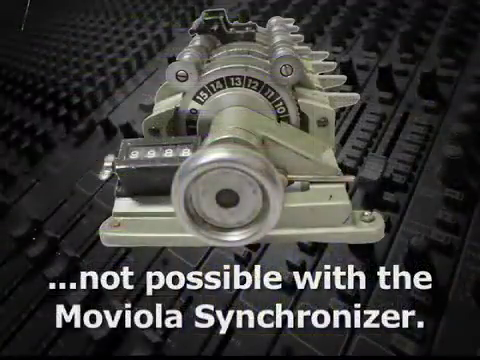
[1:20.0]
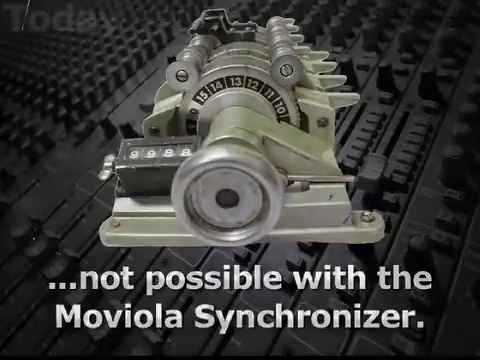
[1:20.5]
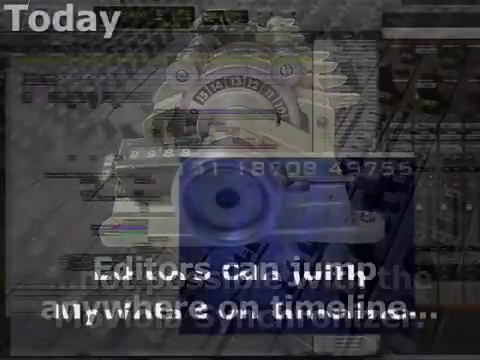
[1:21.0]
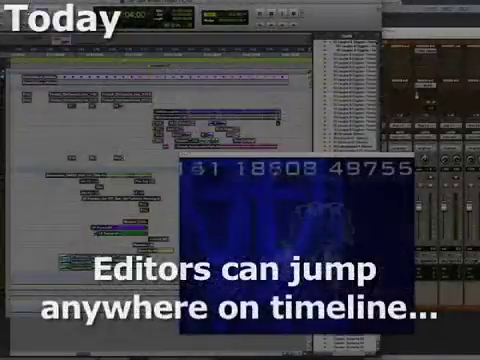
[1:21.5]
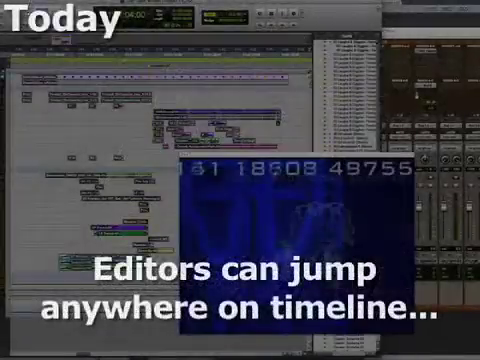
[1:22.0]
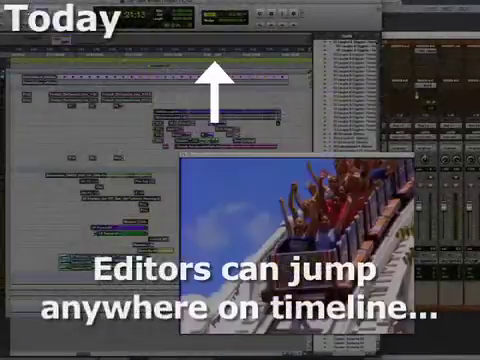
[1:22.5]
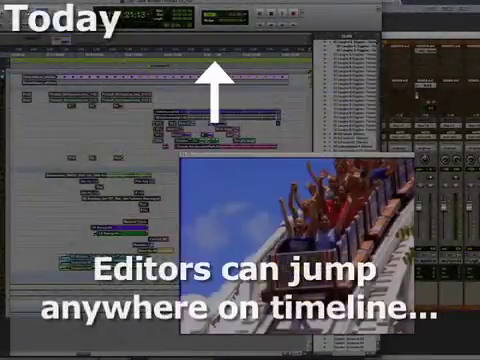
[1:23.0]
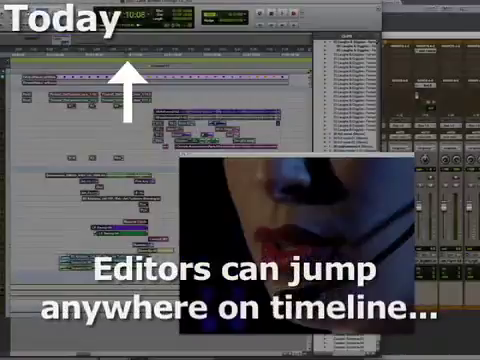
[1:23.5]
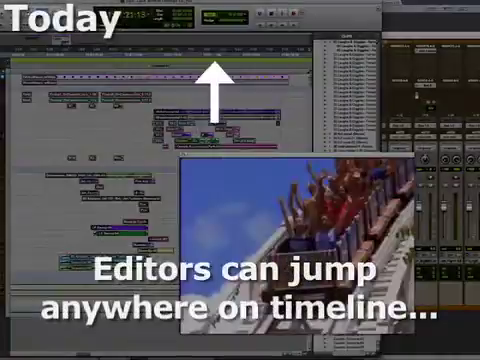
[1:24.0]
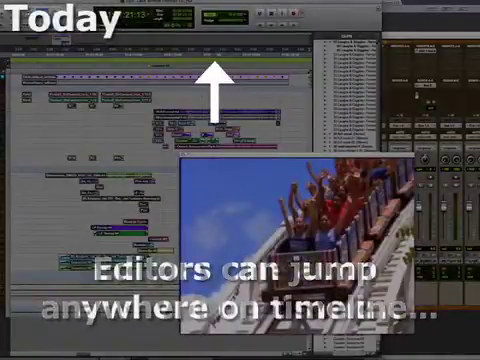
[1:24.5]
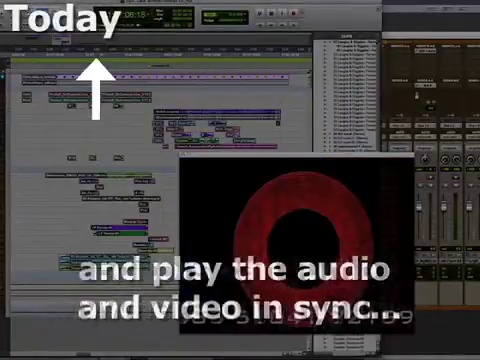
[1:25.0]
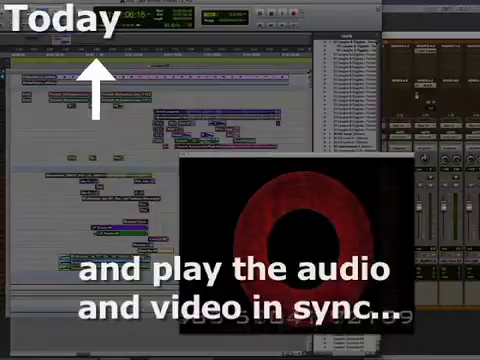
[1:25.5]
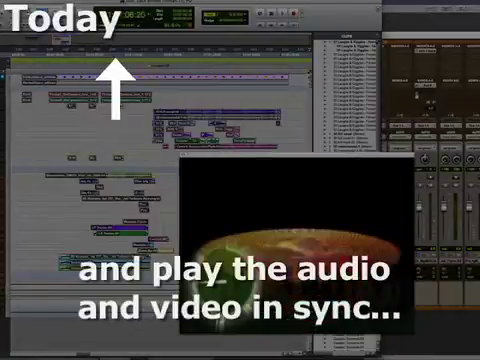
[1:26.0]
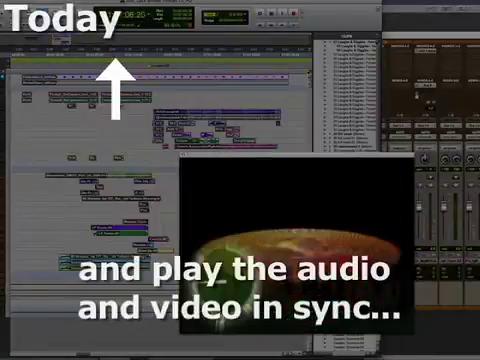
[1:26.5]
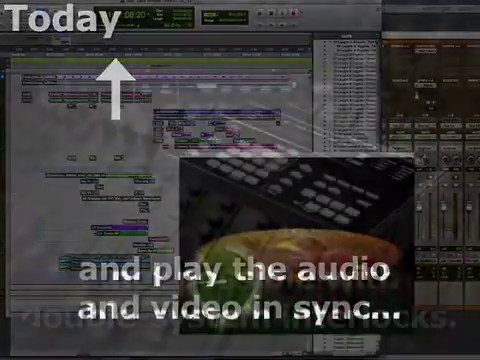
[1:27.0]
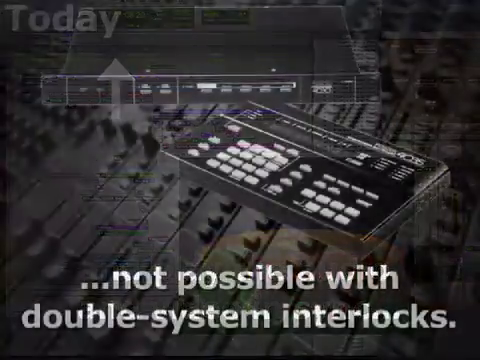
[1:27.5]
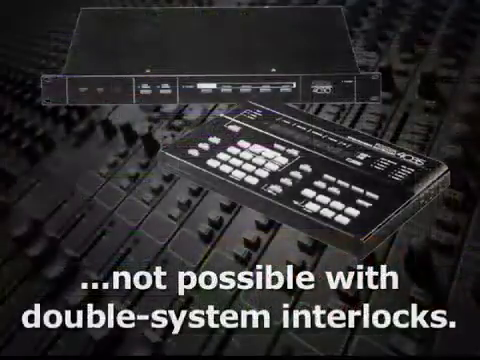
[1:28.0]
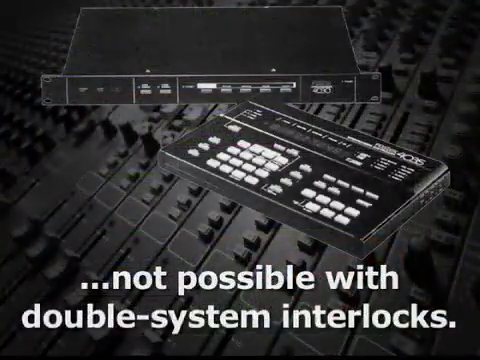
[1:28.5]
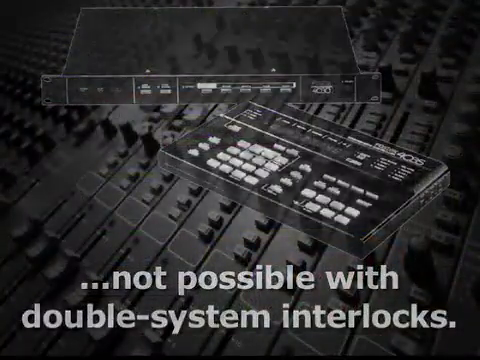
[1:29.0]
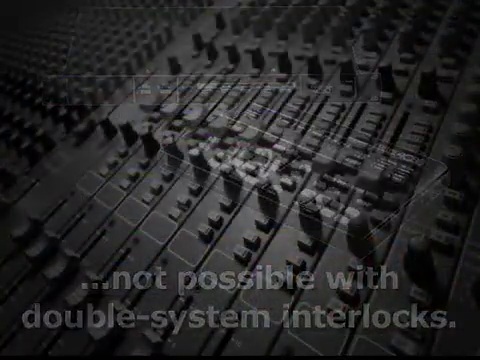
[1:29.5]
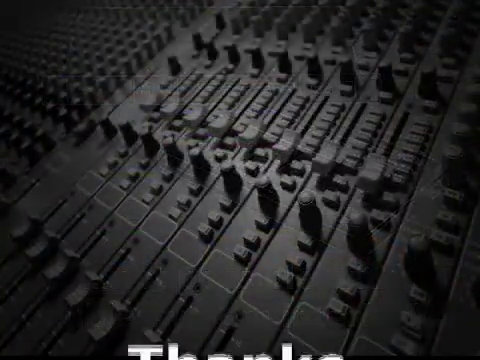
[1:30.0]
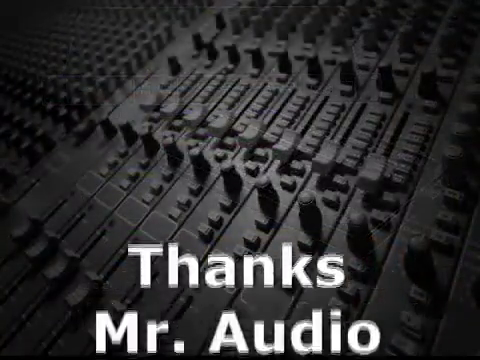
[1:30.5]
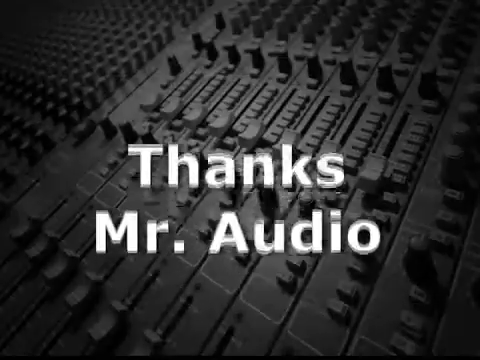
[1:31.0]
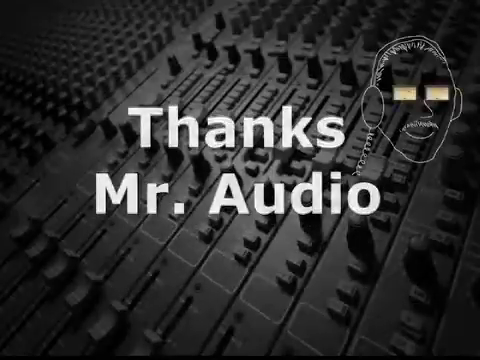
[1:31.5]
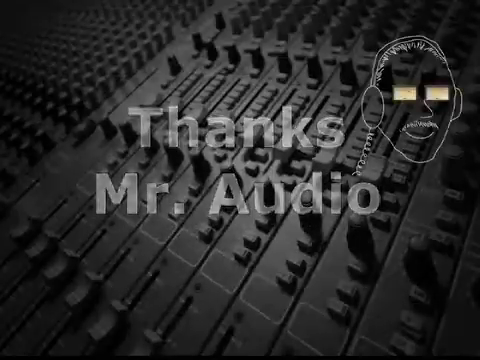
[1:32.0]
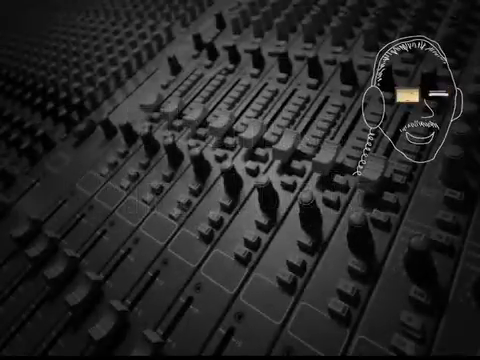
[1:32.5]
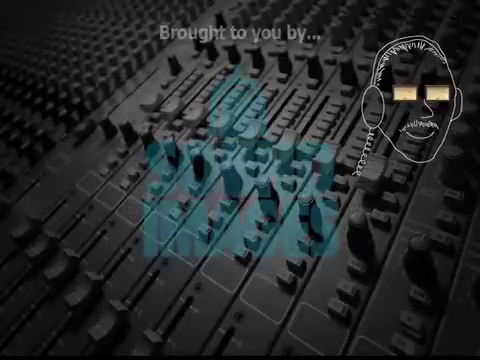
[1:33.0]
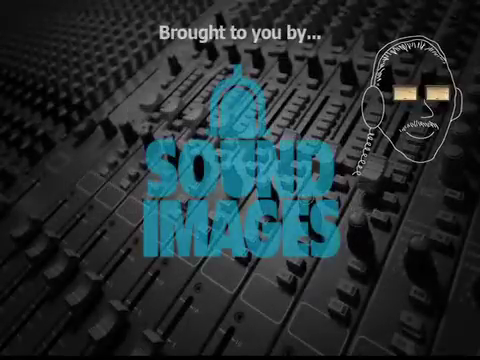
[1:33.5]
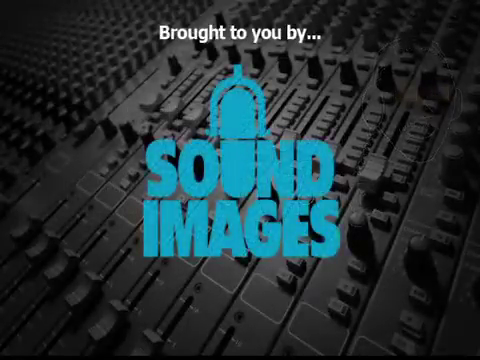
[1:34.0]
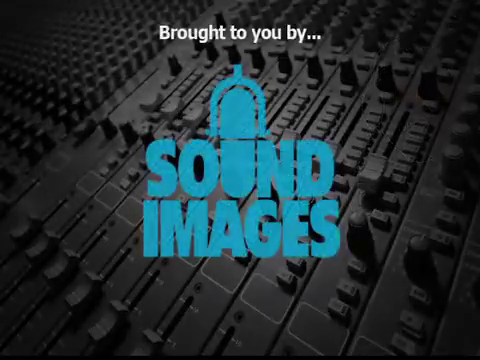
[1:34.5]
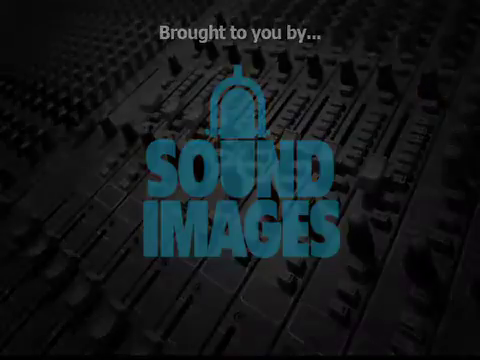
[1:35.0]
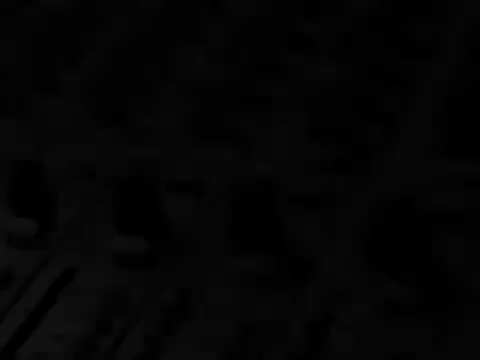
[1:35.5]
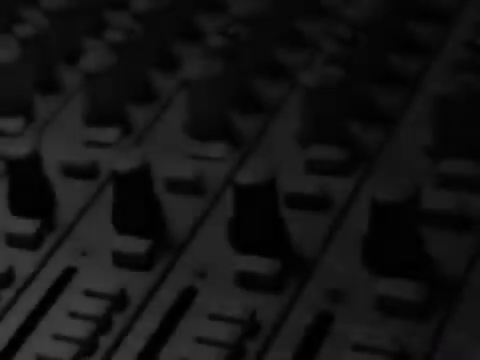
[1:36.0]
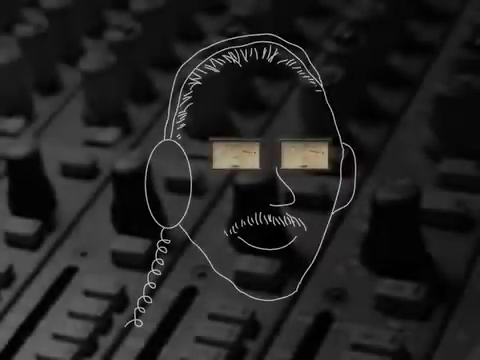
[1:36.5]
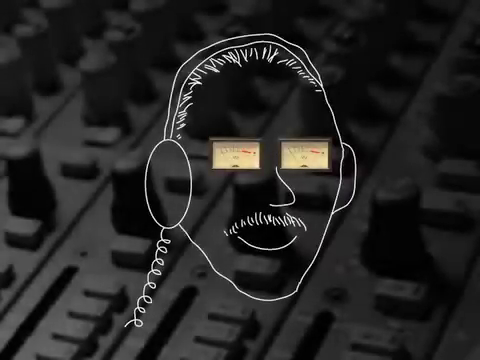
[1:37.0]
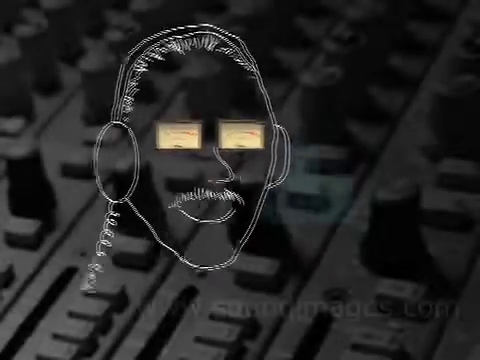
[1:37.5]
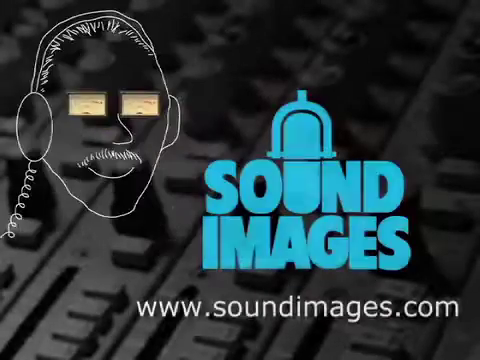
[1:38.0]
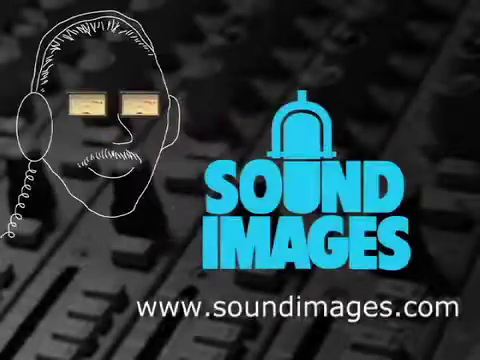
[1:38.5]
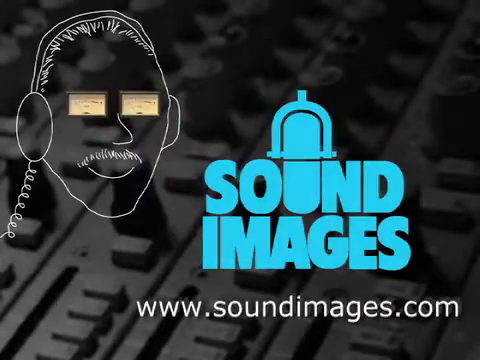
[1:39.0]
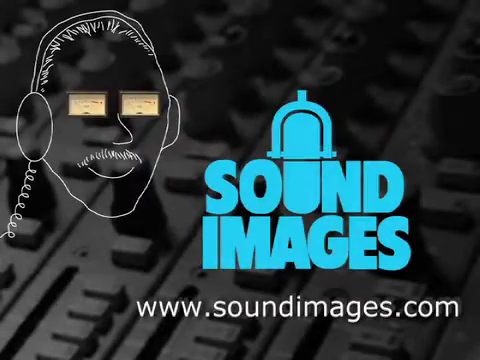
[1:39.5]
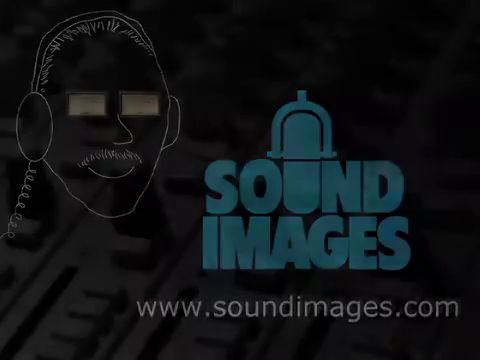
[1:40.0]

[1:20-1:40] The screen showing "today" returns, with a bunch of different images in a window and a desktop interface in the background. Text states that editors can now jump anywhere on the timeline, and varying images change as a cursor moves around. The older technology returns with the synthesizer from the 1980s, with text saying this is not possible with that technology. The black-and-white, vignetted image of what looks like a mixing board returns, and text pops up saying "thank you Mr. Audio" with the line drawing of the man with glasses and a ponytail again. Quickly after, another screen says "brought to you by sound images", a sort of blue logo transparent over the top of the mixing board. Finally an ending title card stays on screen a little longer: the man is actually not wearing glasses but has sort of measurement dials where his eyes are, and he is wearing headphones. The title card shows the website address "soundimages.com".